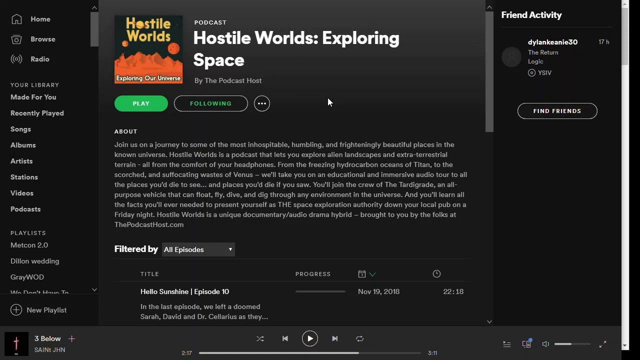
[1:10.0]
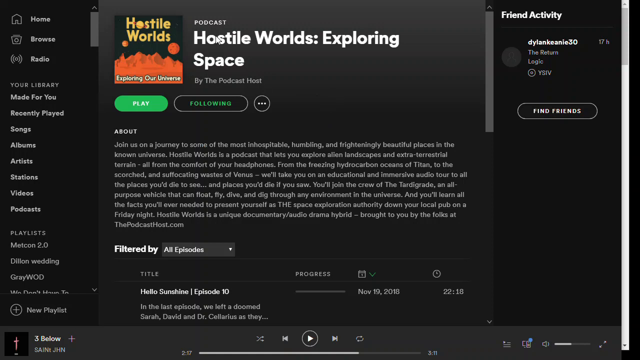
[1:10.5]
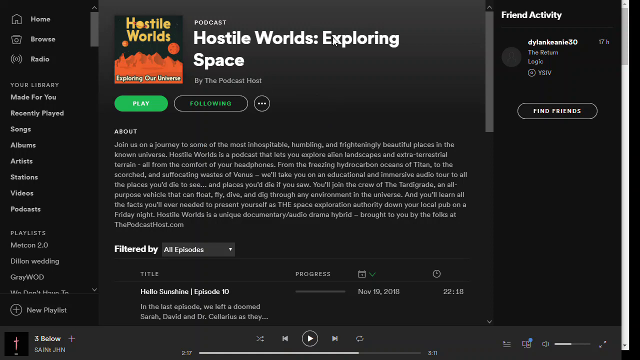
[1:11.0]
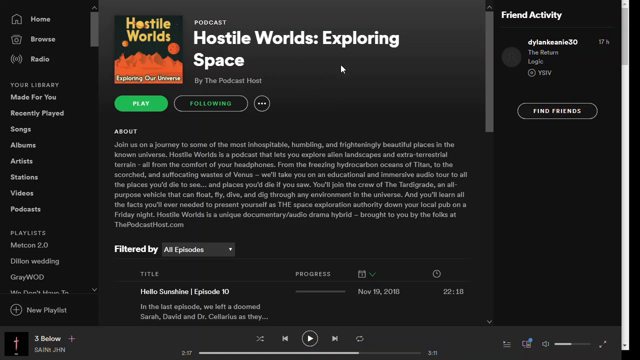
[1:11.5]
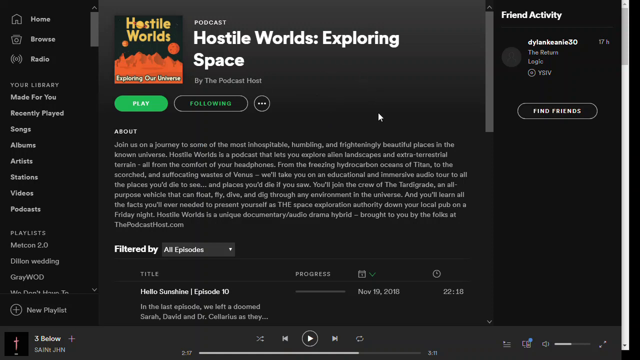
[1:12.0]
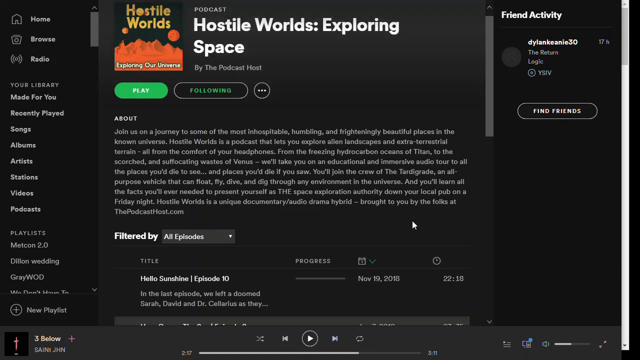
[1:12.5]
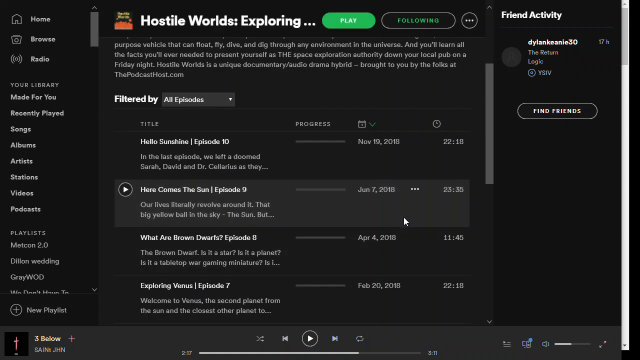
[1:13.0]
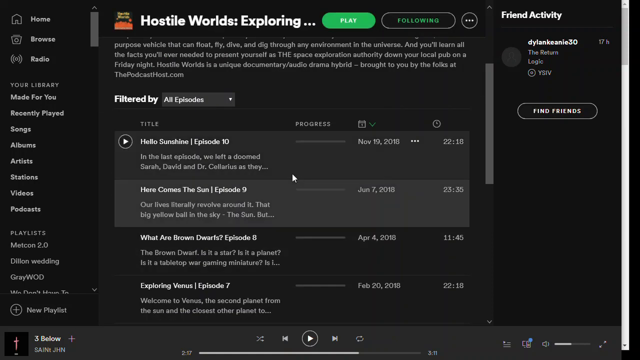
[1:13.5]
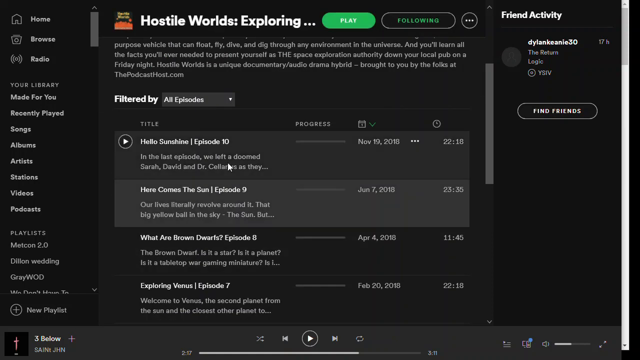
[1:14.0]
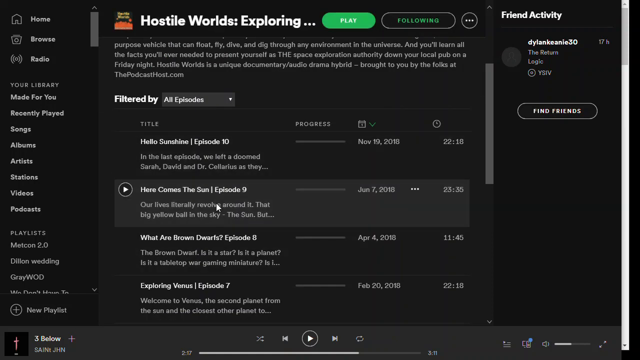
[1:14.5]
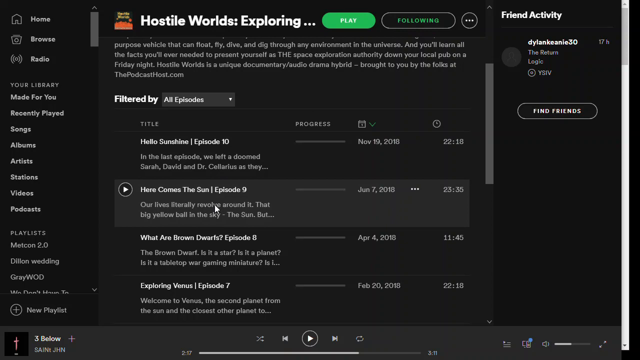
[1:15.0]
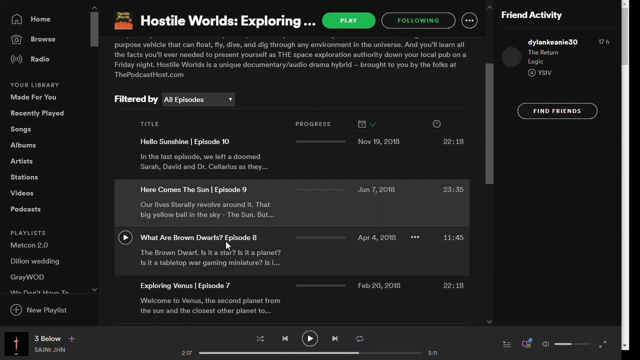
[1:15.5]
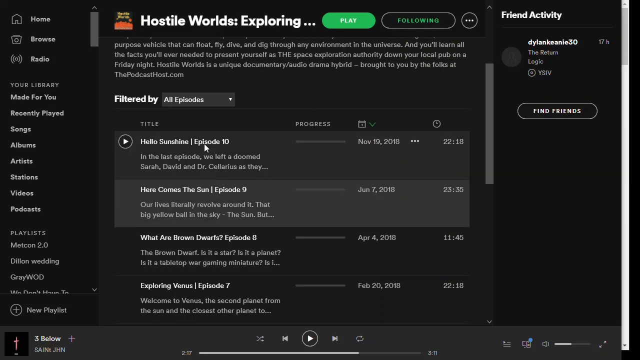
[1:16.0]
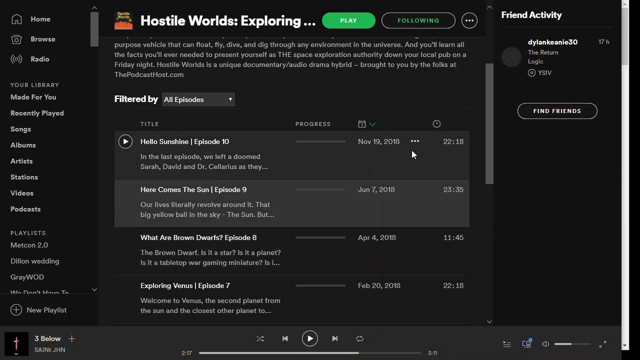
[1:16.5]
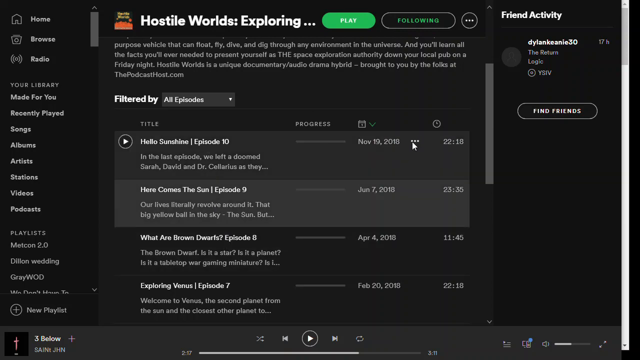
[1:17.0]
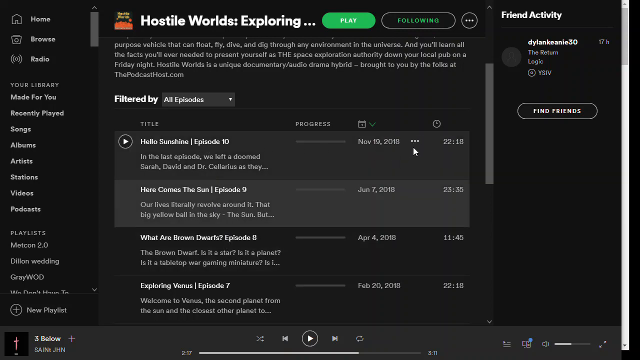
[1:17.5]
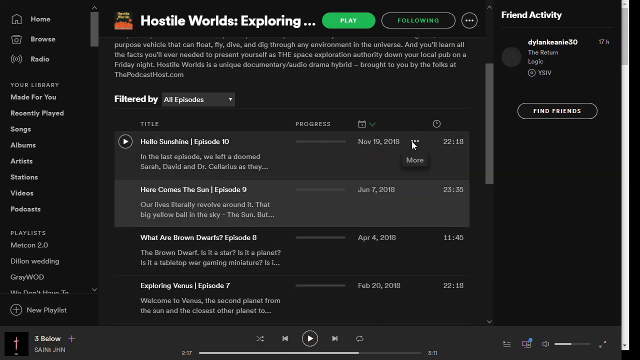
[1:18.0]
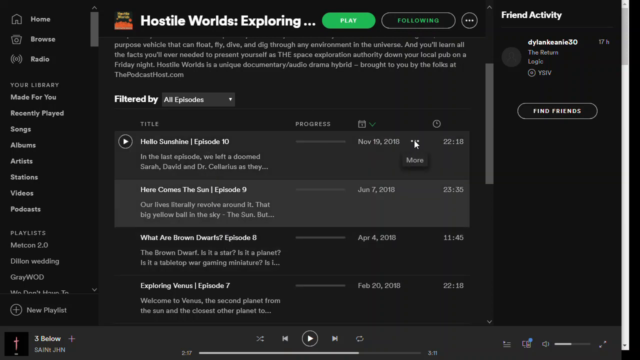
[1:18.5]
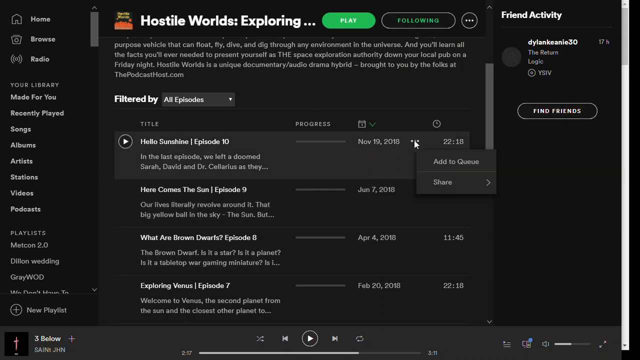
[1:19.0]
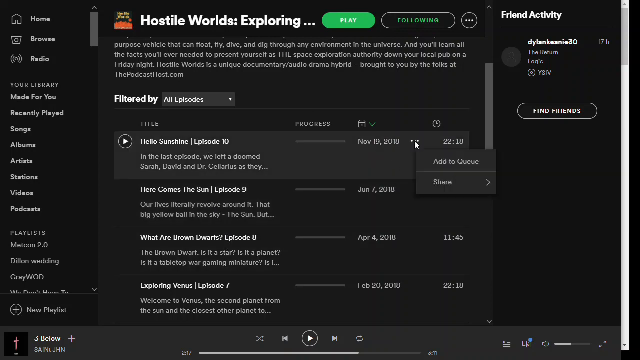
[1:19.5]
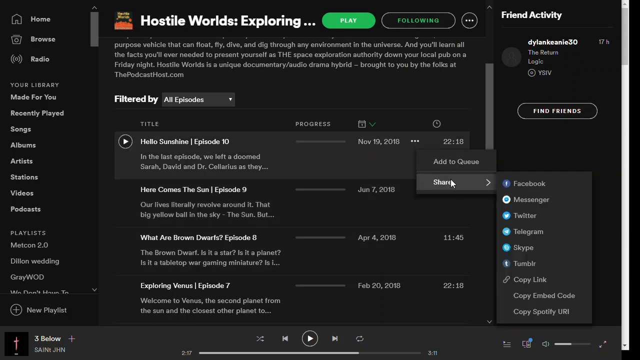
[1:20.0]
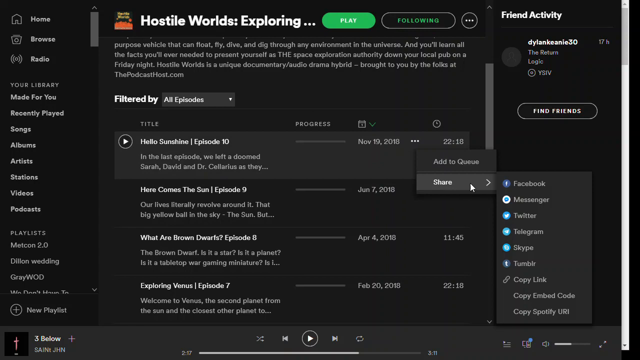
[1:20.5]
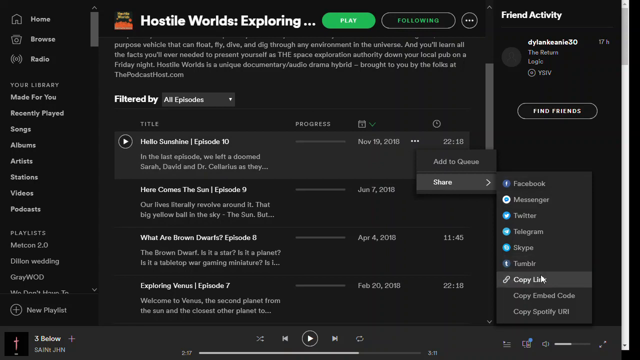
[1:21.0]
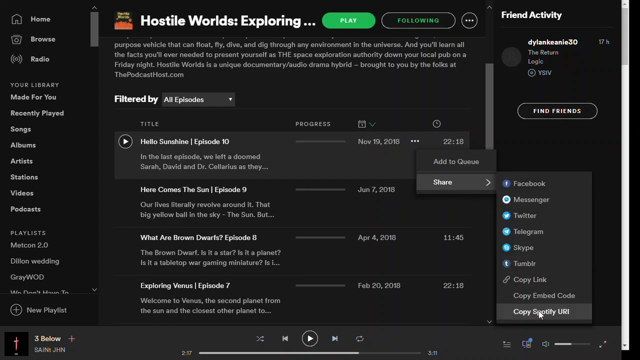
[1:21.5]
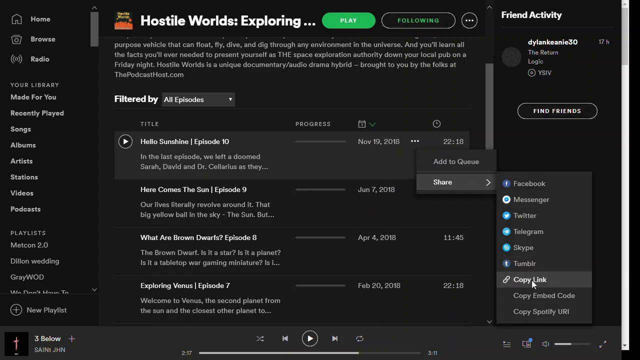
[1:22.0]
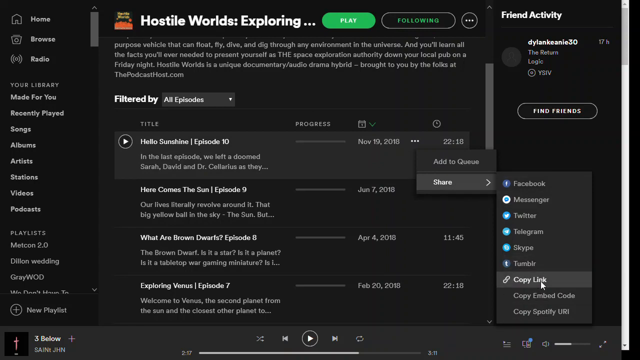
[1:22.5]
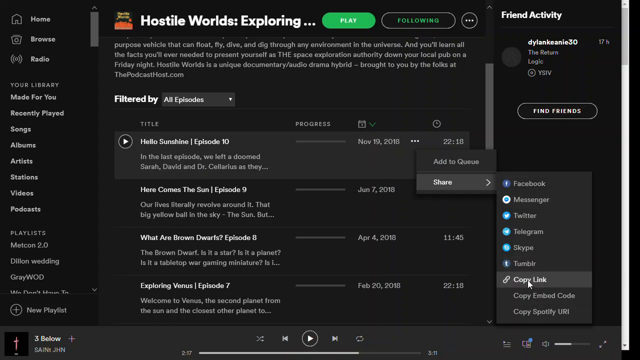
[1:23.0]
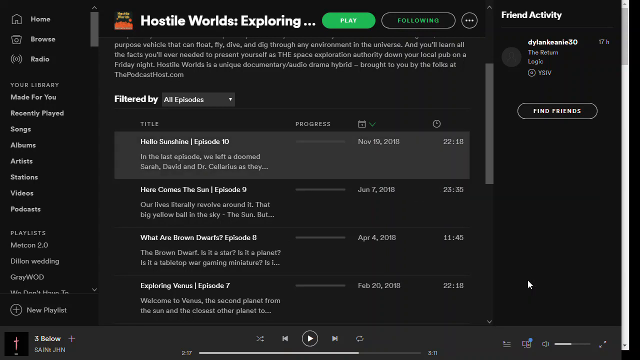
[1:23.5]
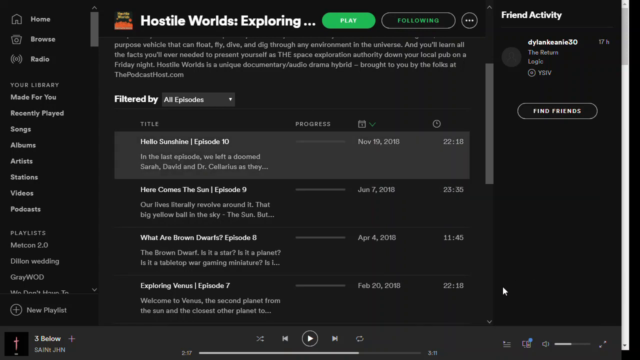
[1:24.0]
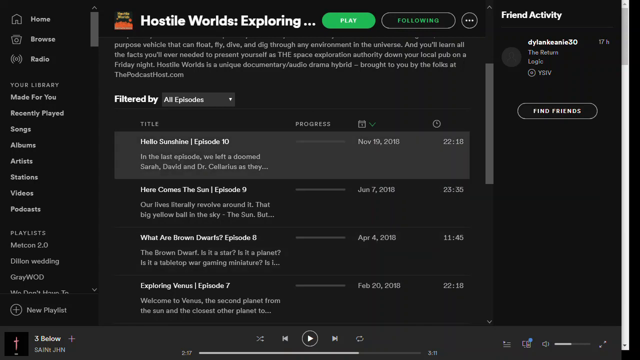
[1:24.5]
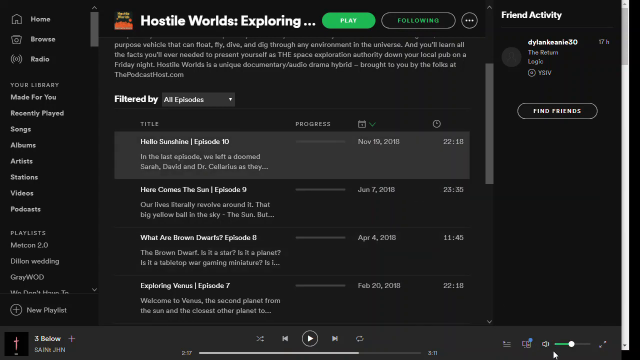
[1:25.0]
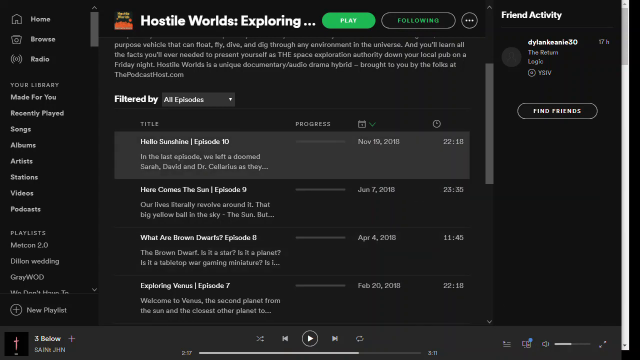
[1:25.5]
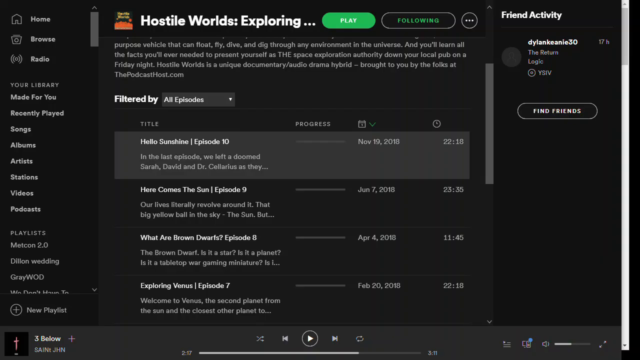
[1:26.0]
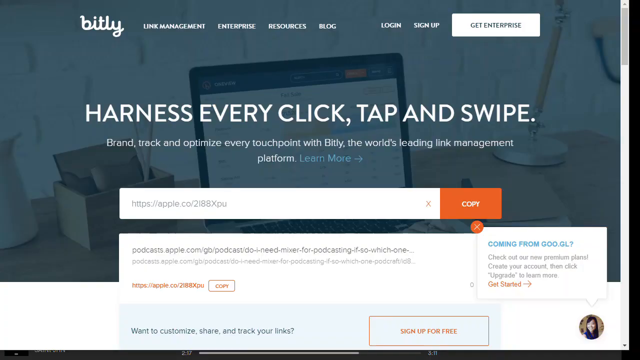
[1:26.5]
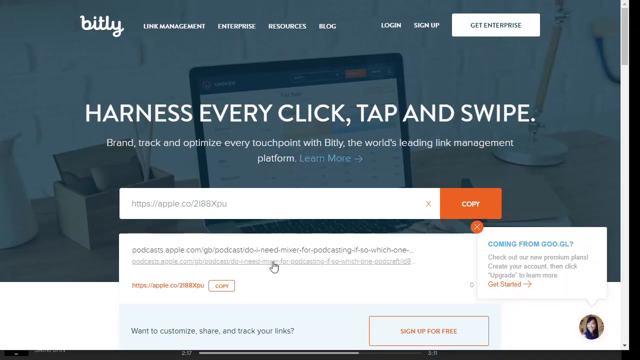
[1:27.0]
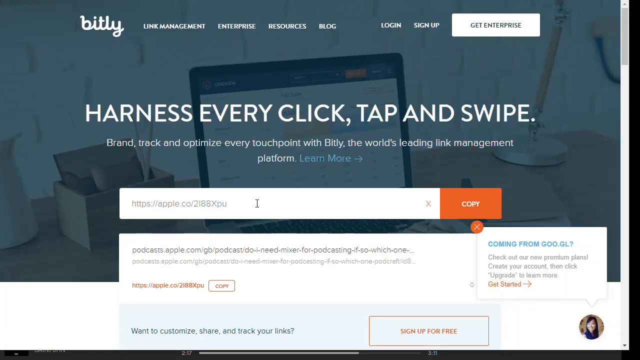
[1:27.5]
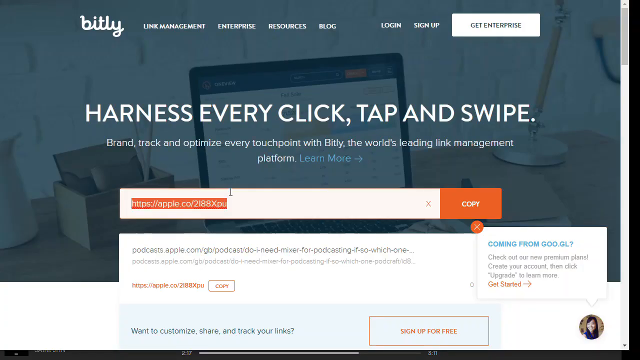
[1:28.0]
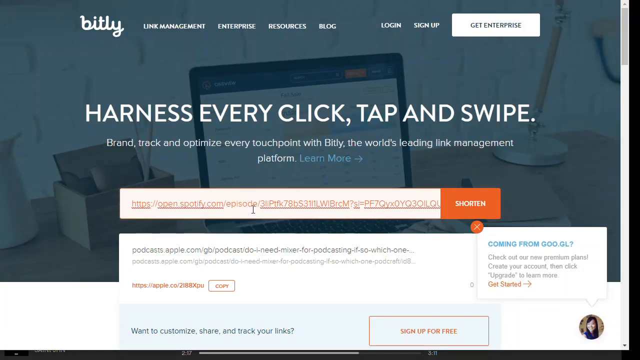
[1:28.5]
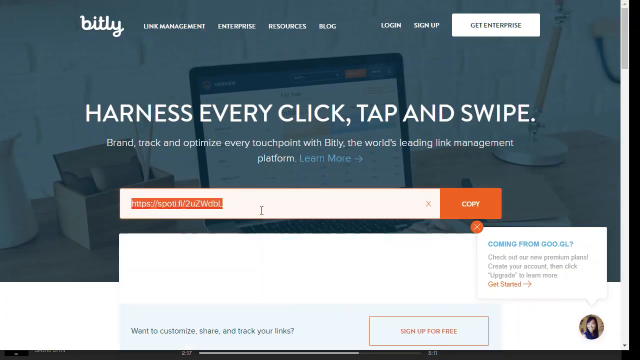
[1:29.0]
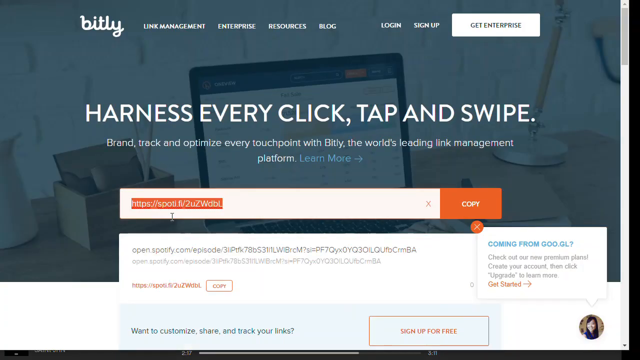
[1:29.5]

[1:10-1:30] A podcast is shown in Spotify, called "Hostile Worlds Exploring Space," by the same people, the podcast host. The view scrolls down to the list of episodes, showing episodes 10, 9, 8 and 7. As the mouse hovers over each one, its background turns a lighter gray, a play icon appears to the left, and a dot-dot-dot menu appears. The mouse hovers over that menu, whose hint text says "more." Clicking it gives two options, "add to queue" or "share." Share is clicked, bringing up a list of social media programs, and the cursor moves down to the option "copy link," hovers over it, and clicks it.